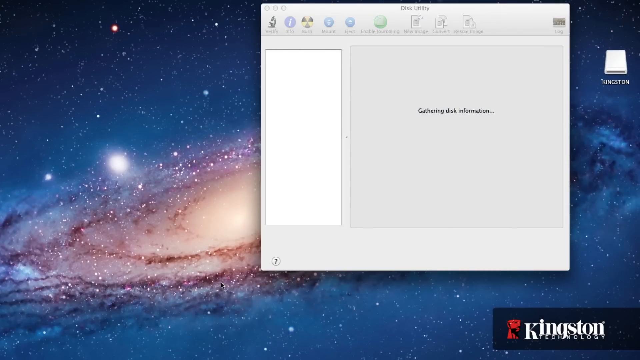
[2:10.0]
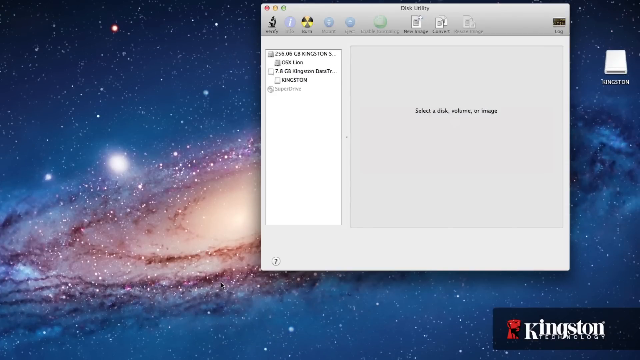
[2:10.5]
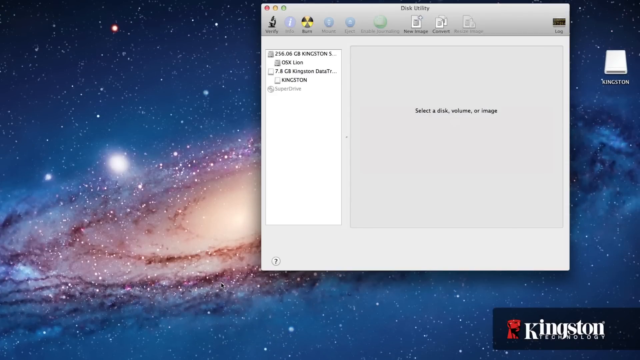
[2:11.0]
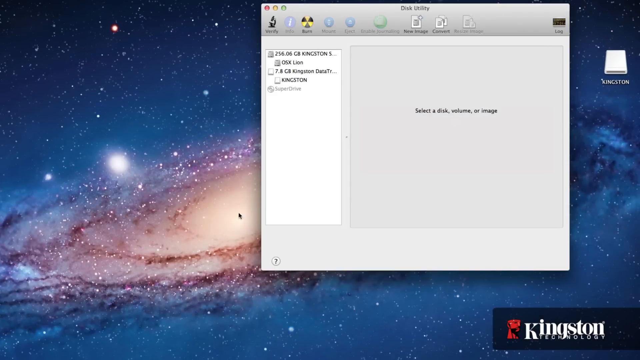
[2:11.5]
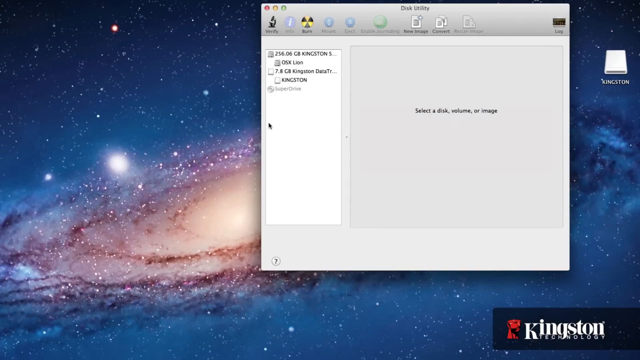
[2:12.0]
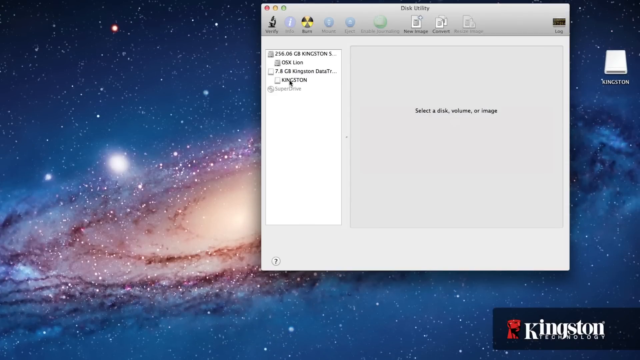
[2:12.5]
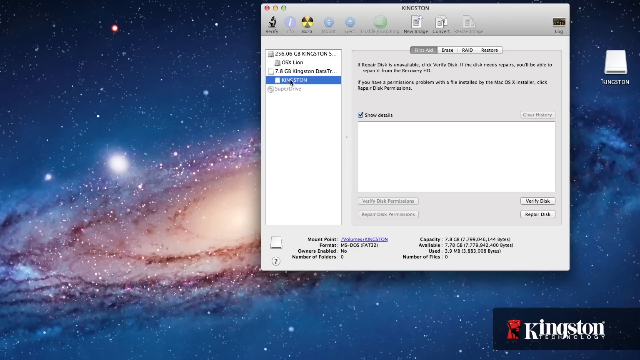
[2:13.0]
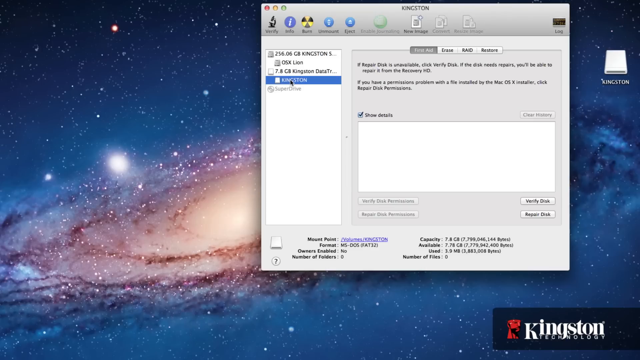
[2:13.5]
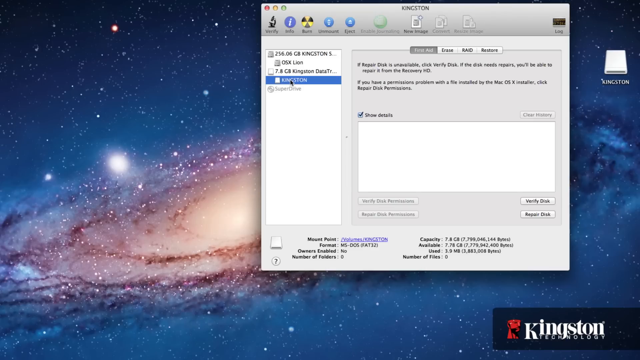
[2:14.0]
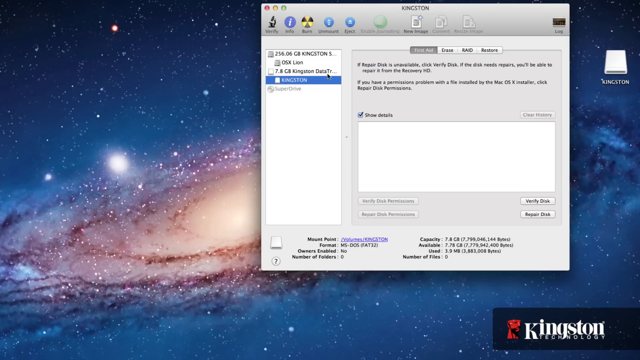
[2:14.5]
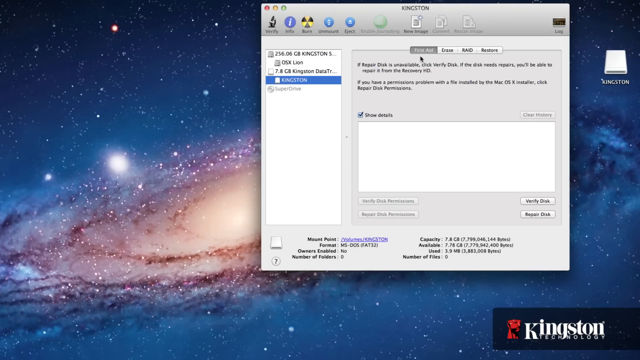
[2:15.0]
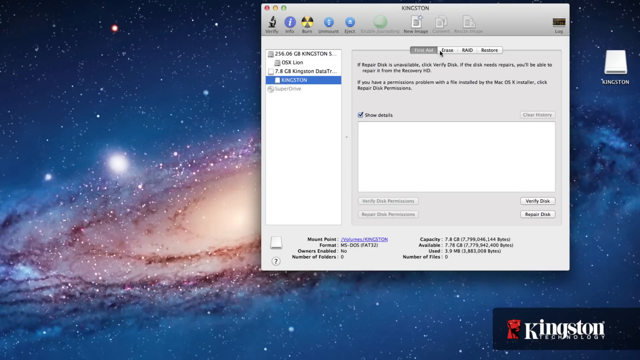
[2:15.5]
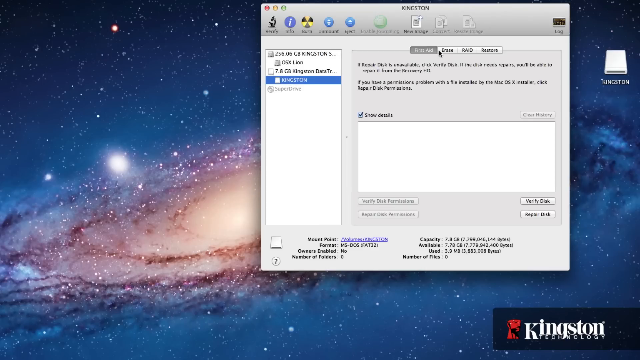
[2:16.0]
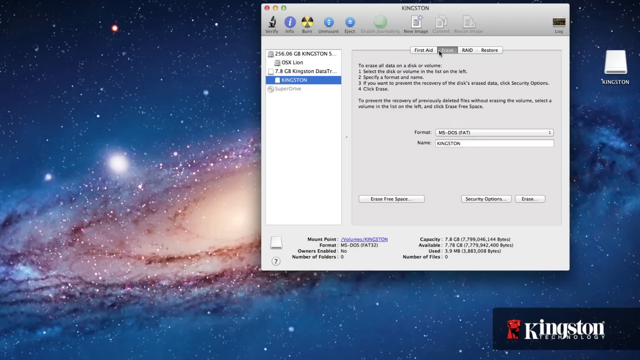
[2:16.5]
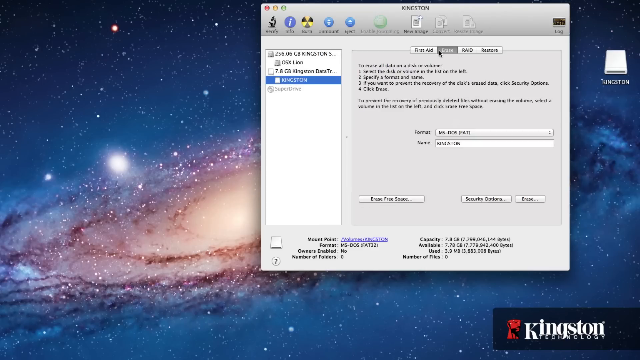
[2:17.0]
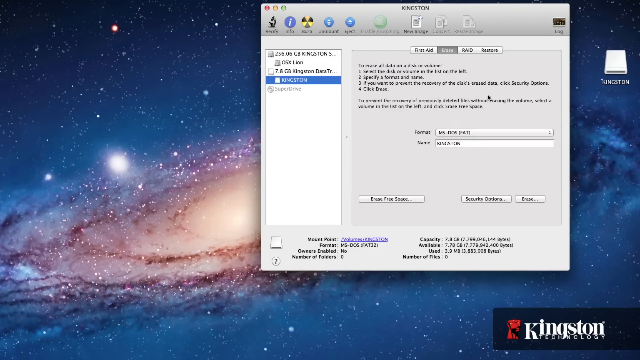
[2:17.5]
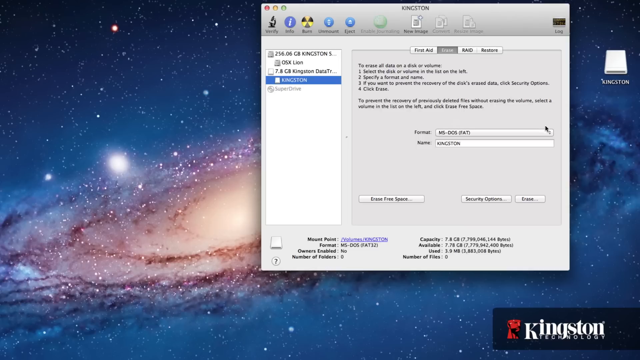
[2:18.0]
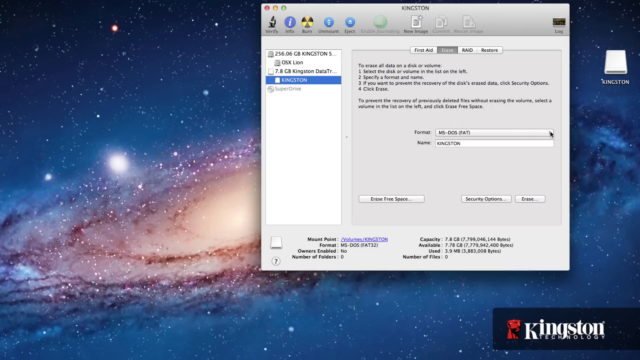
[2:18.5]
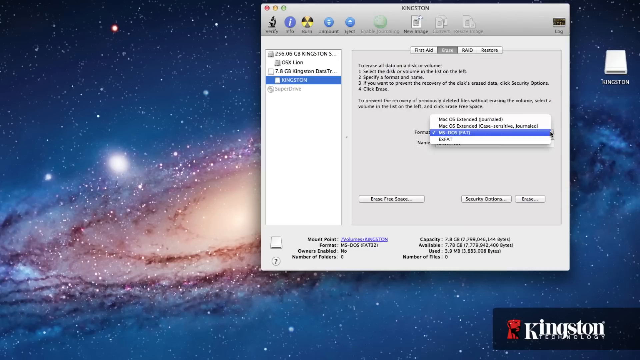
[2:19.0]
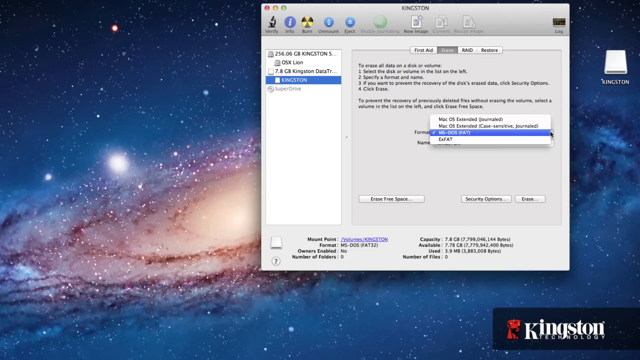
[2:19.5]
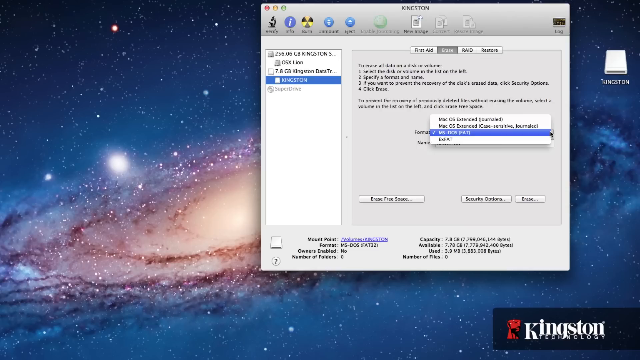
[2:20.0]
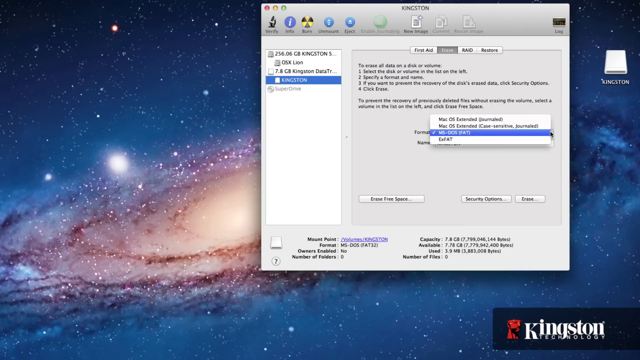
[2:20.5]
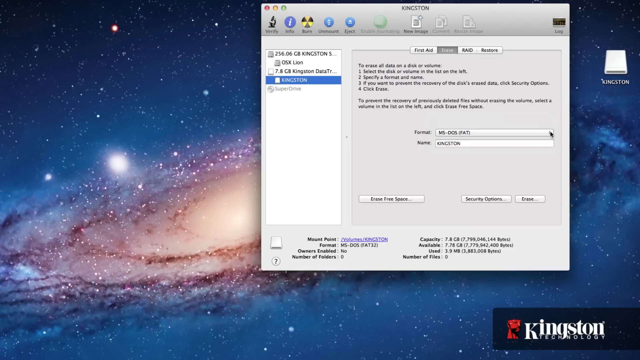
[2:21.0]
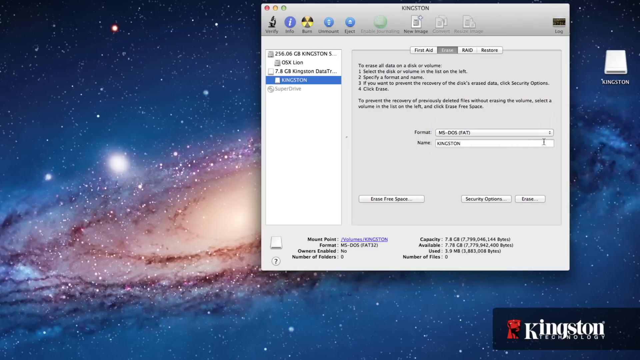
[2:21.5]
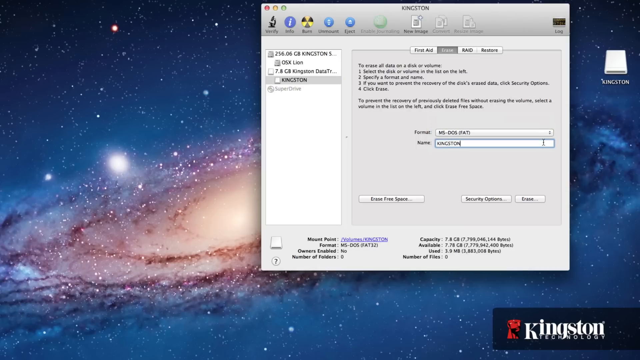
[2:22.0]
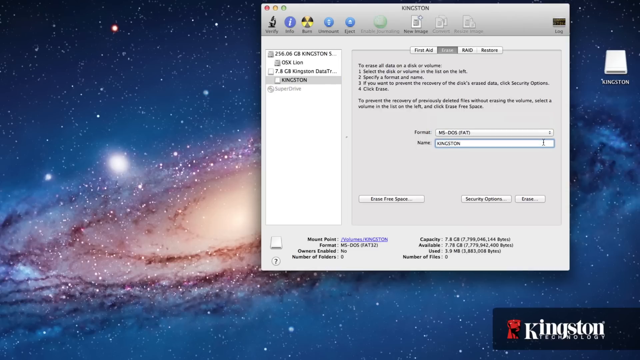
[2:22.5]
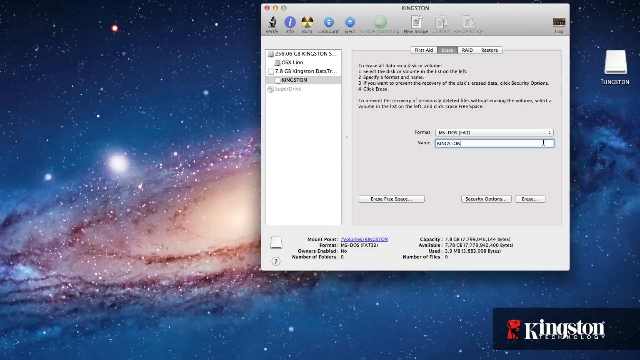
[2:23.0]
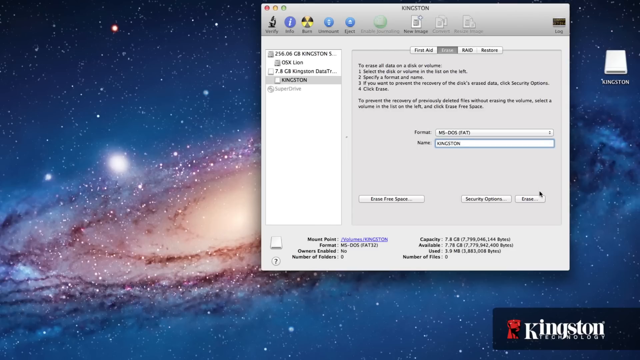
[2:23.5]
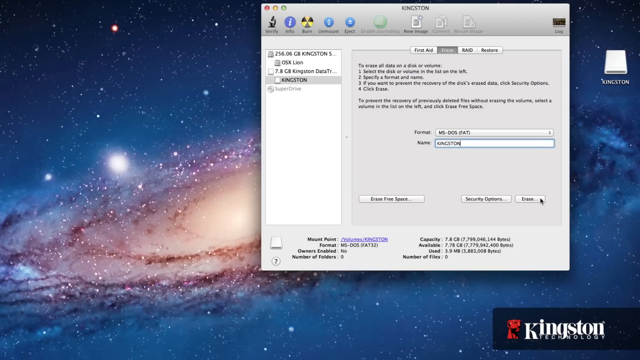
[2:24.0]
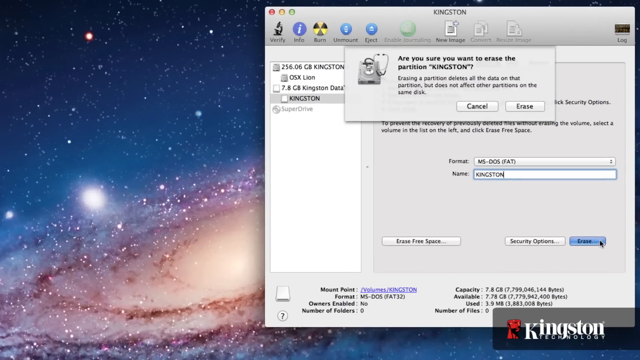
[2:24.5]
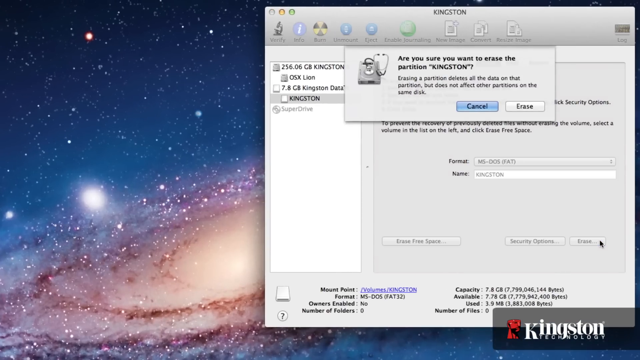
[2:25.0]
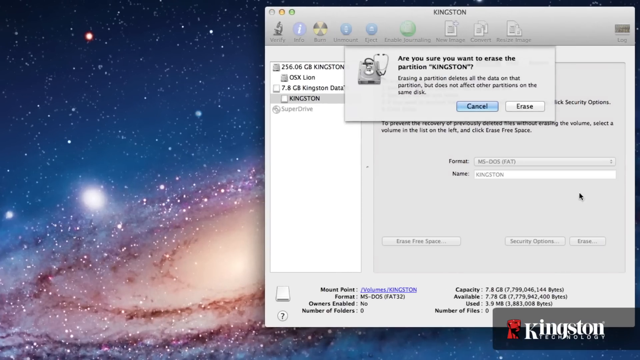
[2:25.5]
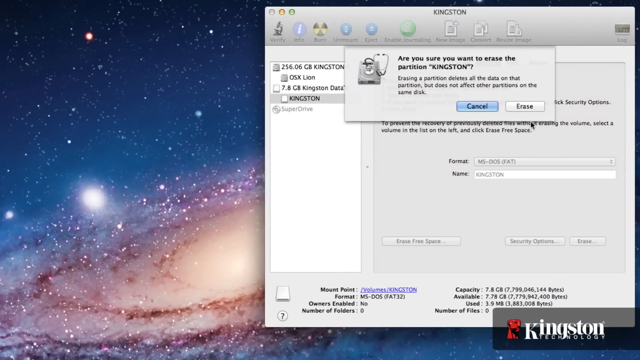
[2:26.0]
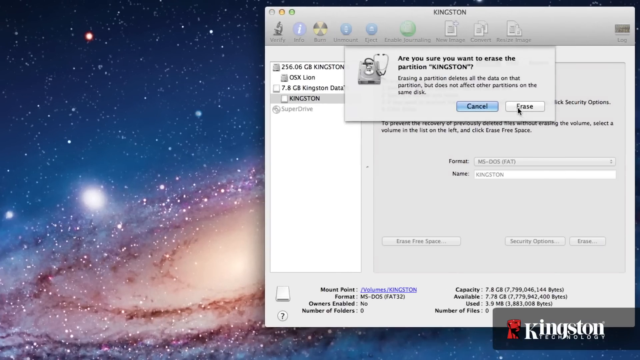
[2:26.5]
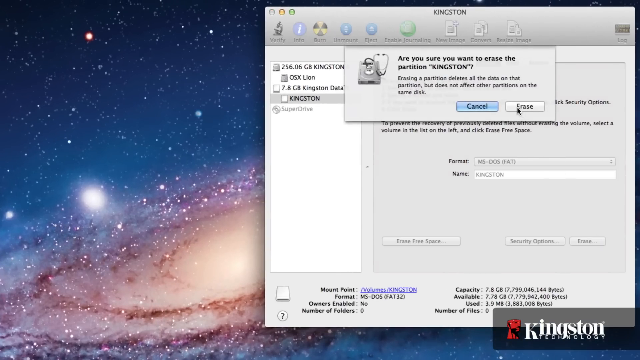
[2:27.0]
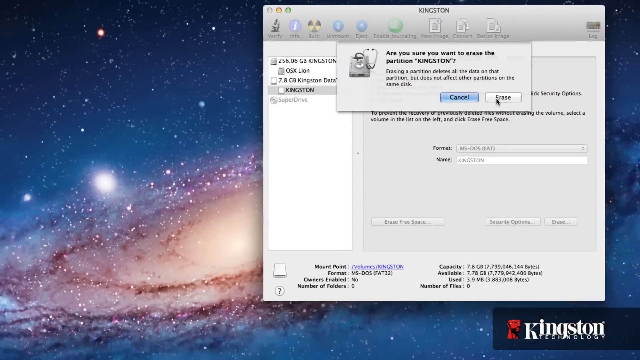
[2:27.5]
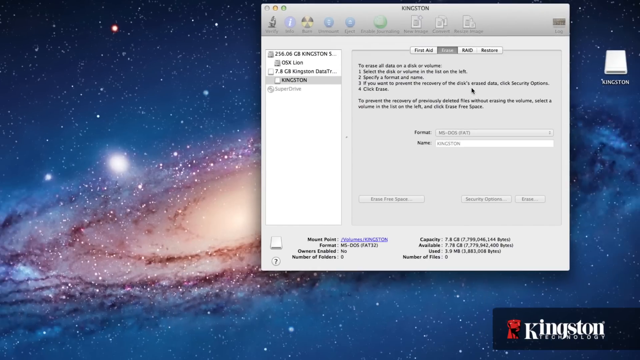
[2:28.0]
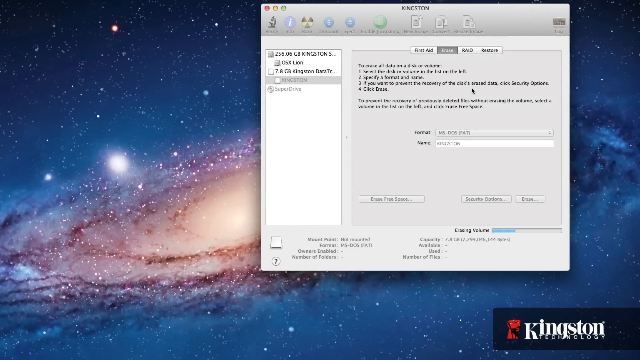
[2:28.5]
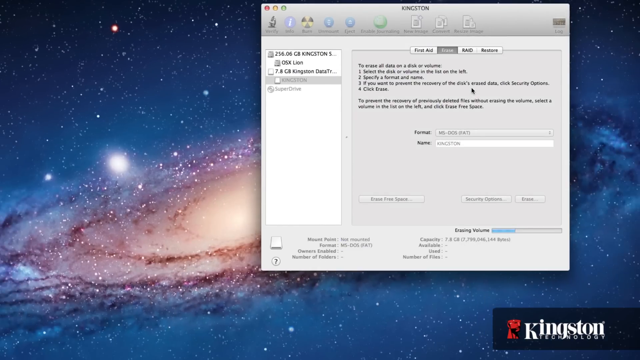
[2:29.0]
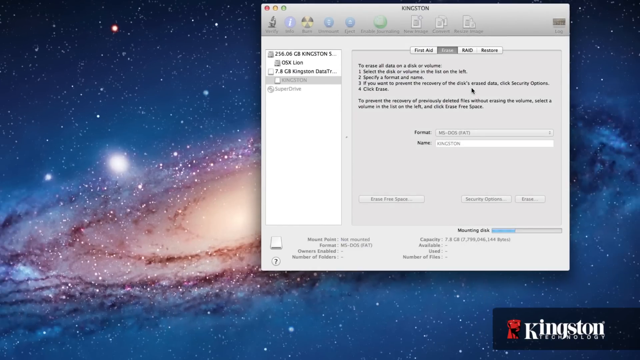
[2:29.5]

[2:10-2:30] A gray box in the middle of the computer monitor says "gathering disk information." When it finishes, the screen reads "select a disk volume or image." On the left, the cursor goes to the port drive, and an area labeled "Kingston" opens. The person clicks on the format for that section, names it Kingston, and selects erase; a message asks "are you sure you want to erase Kingston?" They click yes, and the data on the Kingston stick drive is erased. The Kingston name is visible on the screen.